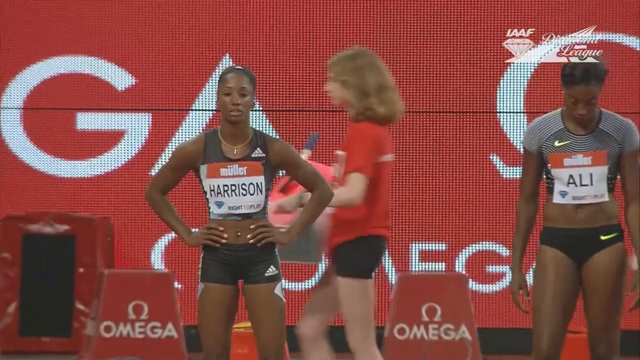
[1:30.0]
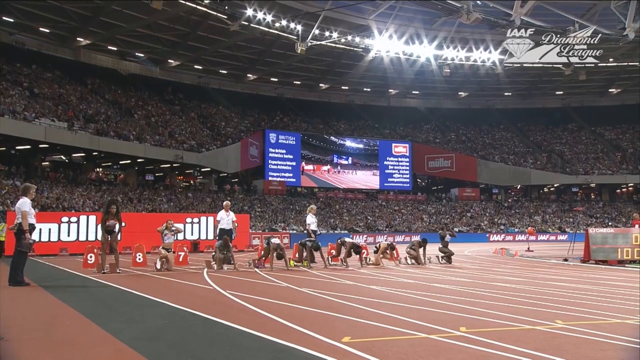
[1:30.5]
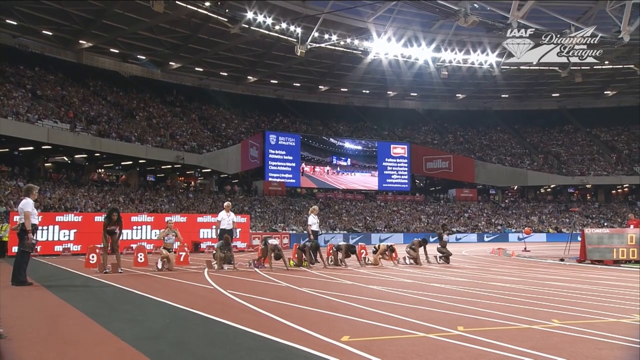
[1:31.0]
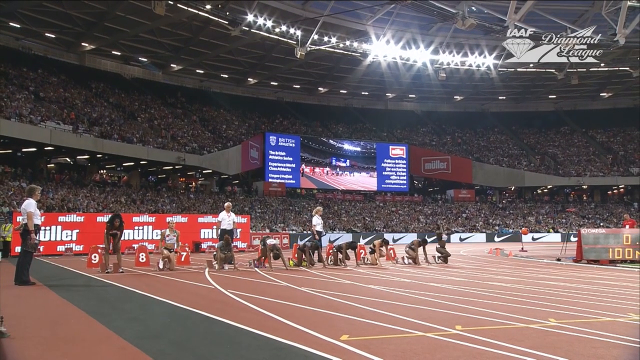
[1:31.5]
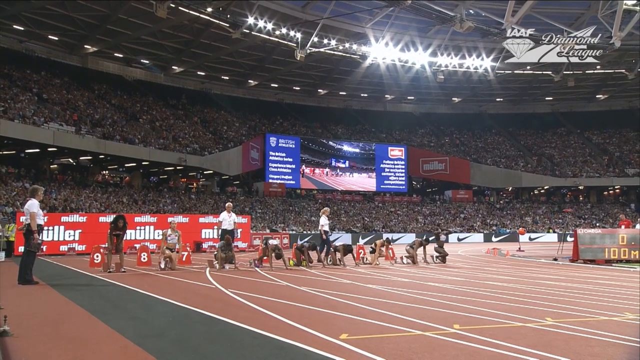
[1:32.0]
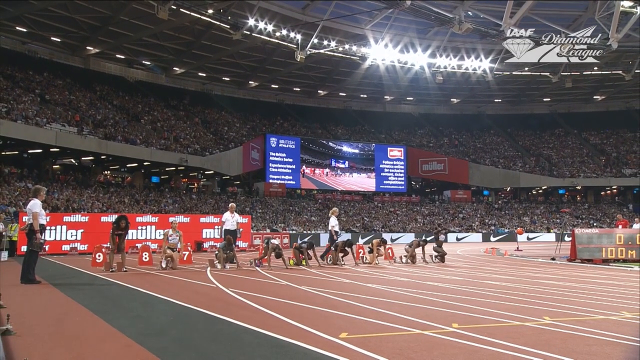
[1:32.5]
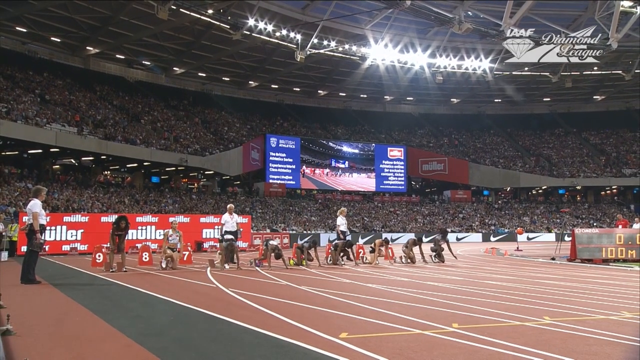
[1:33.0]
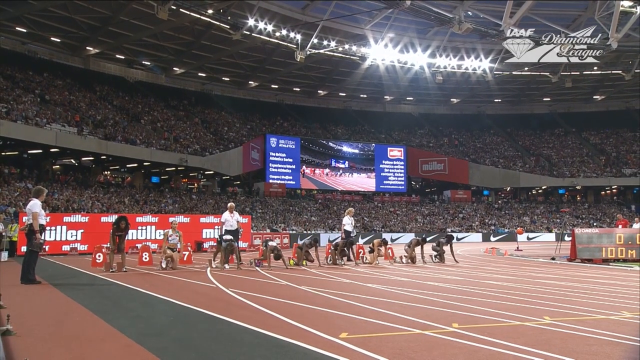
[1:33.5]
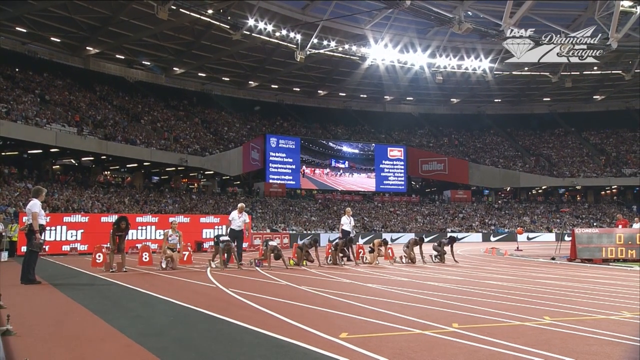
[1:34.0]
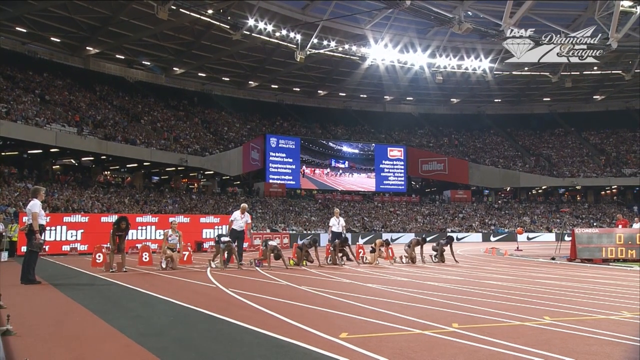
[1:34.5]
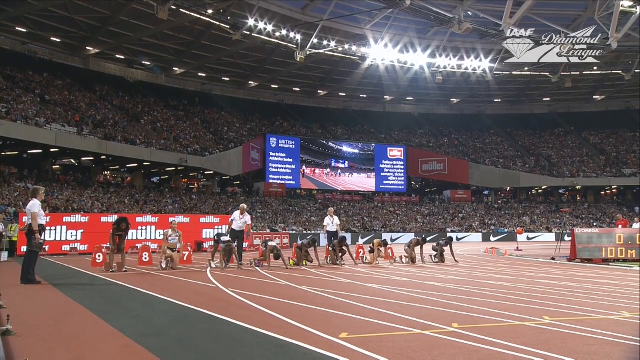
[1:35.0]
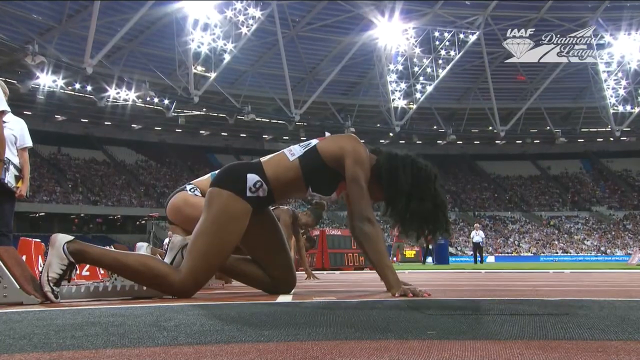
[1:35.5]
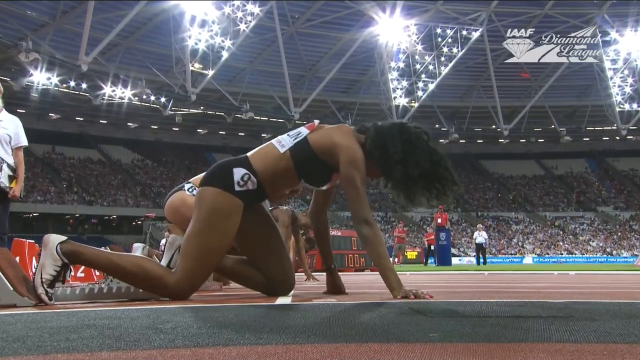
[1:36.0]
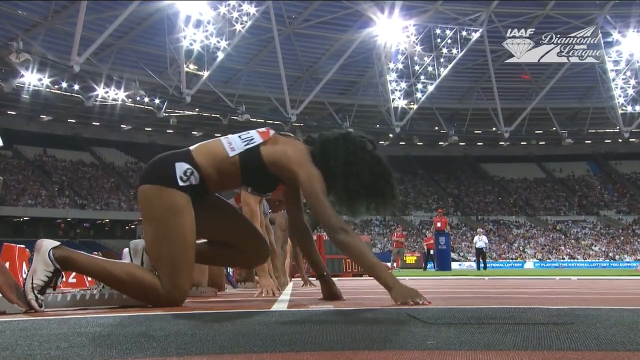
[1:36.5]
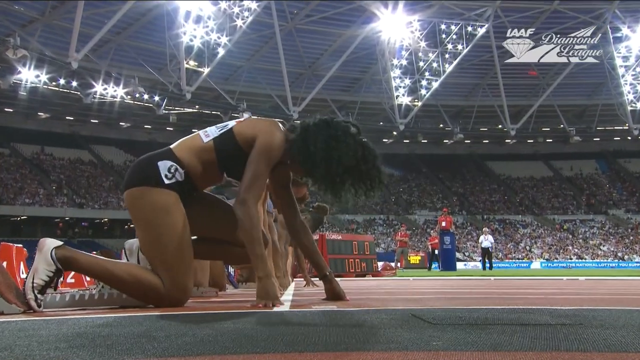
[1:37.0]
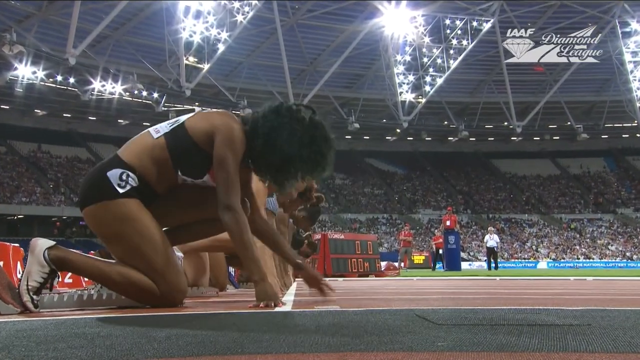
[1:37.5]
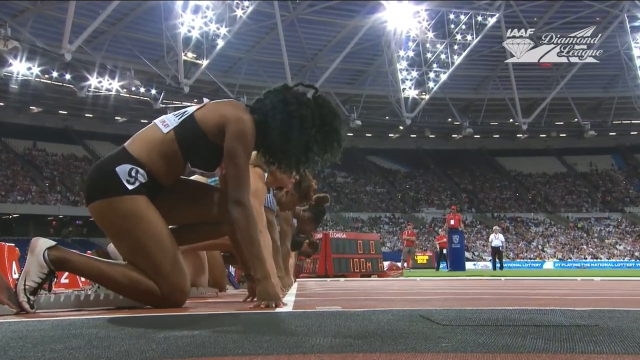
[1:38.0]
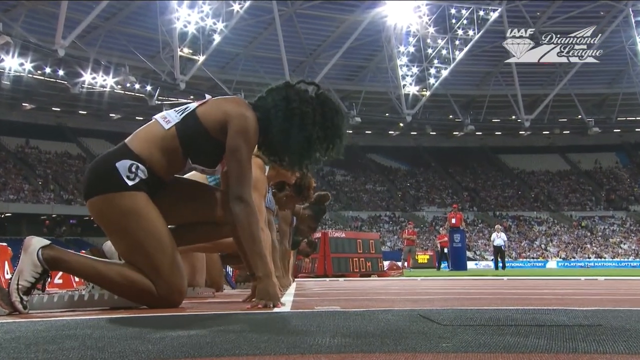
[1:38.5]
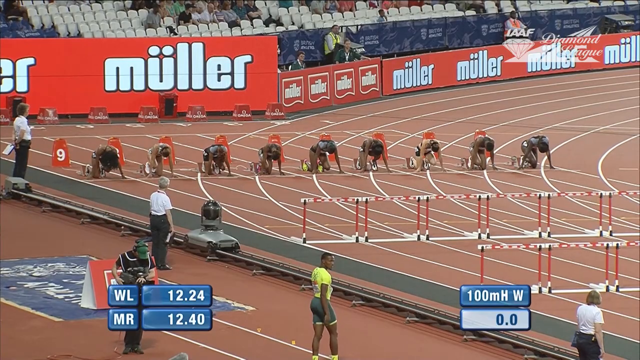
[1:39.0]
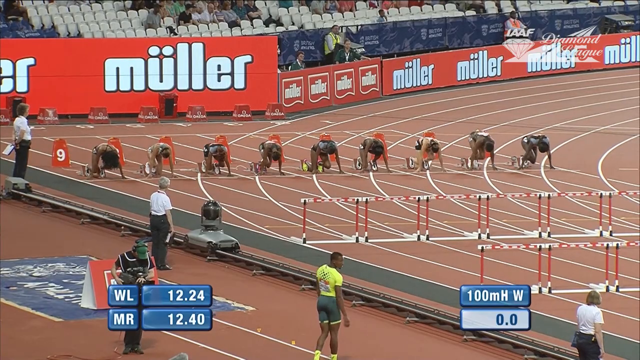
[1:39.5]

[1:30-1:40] The event takes place at a different location that looks to be indoors rather than outdoors, in a stadium in London. The event looks to be the women's 100-meter hurdles again. The runners line up at the starting line, then the camera pans out to a wide shot of the end of the stadium where they are lined up. The runner at the end gets a still shot as she gets ready to take her position on her starting mount.